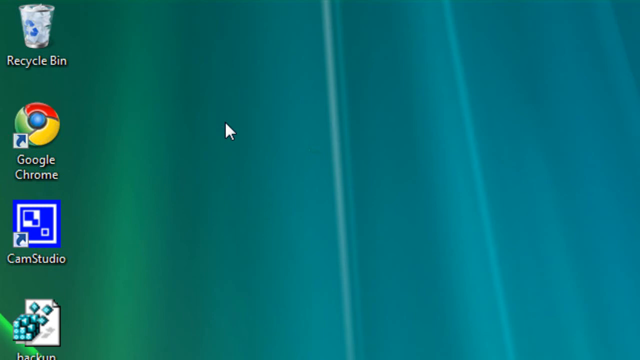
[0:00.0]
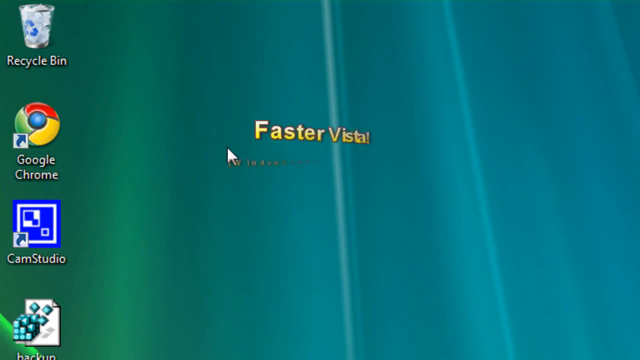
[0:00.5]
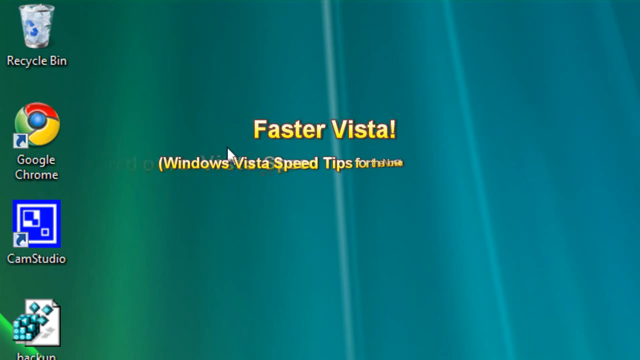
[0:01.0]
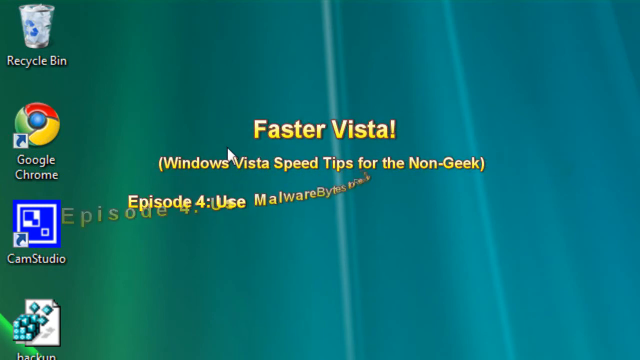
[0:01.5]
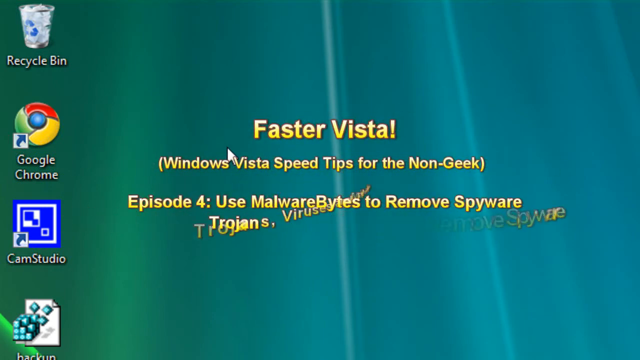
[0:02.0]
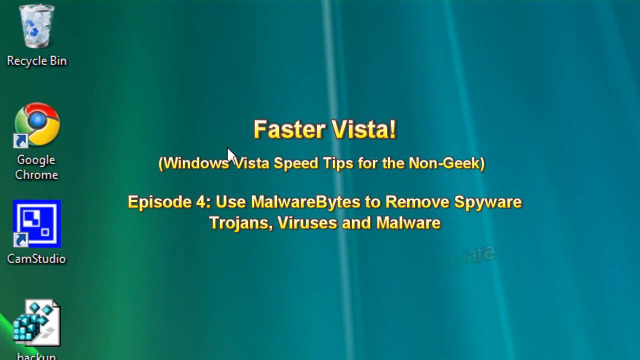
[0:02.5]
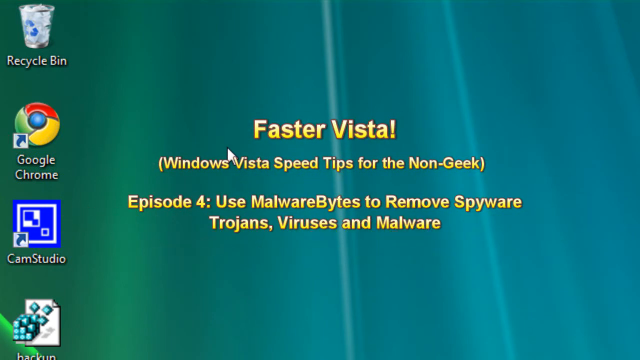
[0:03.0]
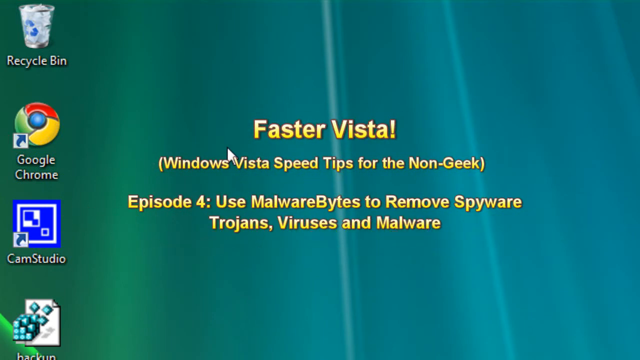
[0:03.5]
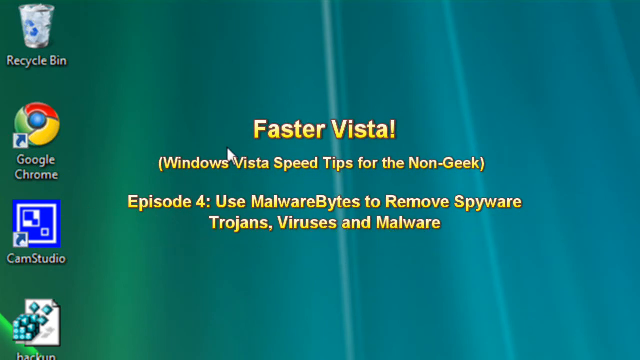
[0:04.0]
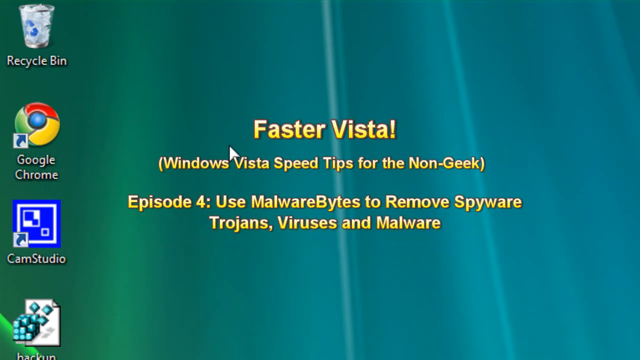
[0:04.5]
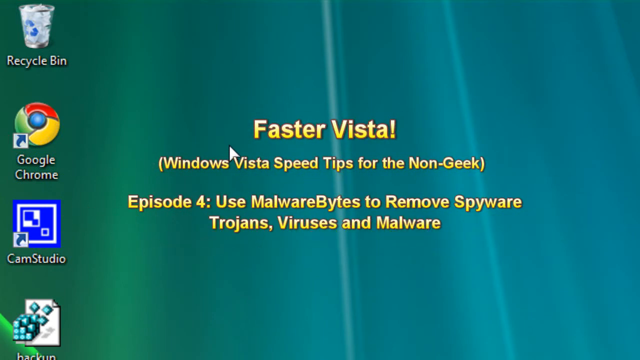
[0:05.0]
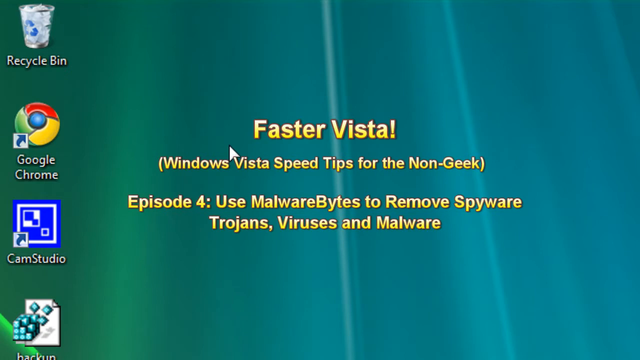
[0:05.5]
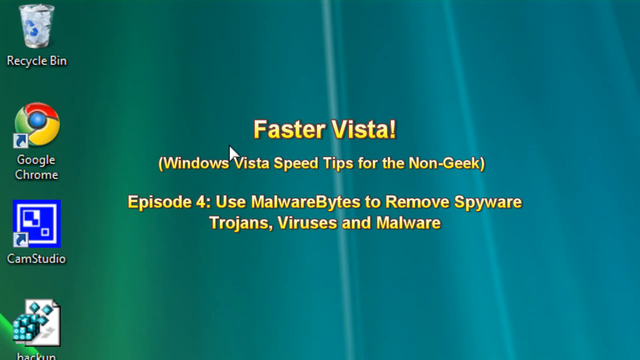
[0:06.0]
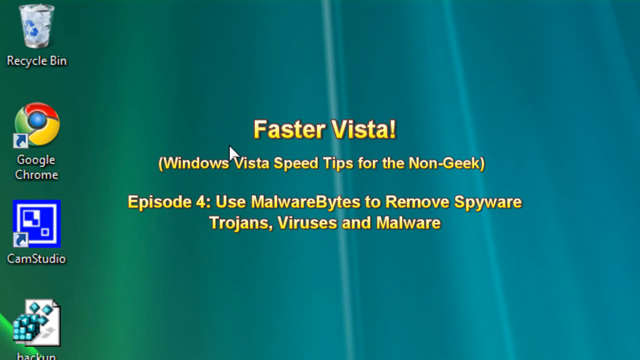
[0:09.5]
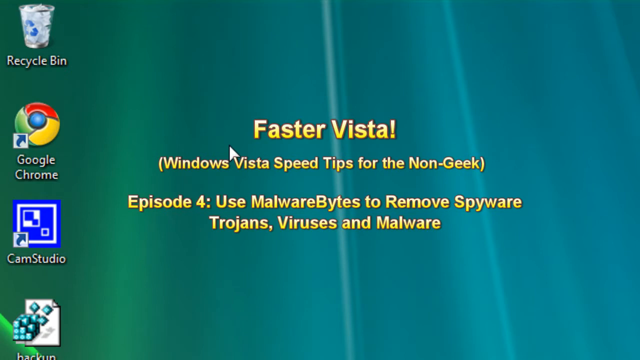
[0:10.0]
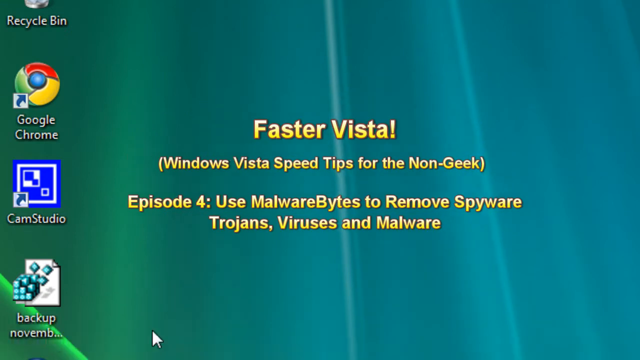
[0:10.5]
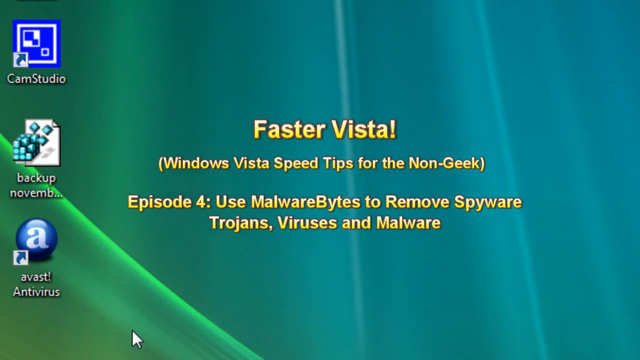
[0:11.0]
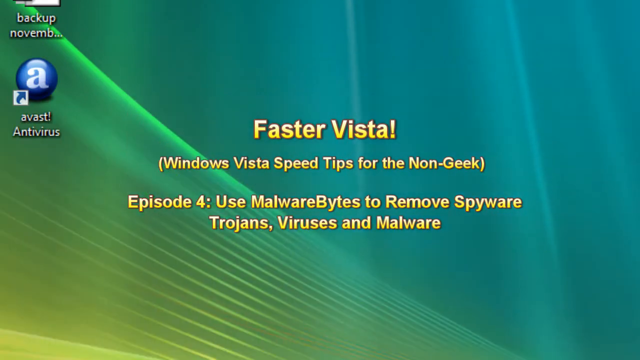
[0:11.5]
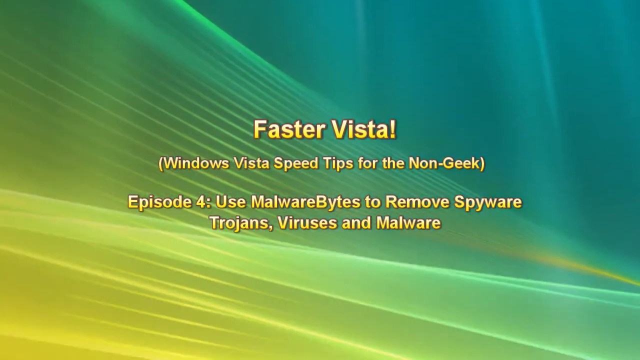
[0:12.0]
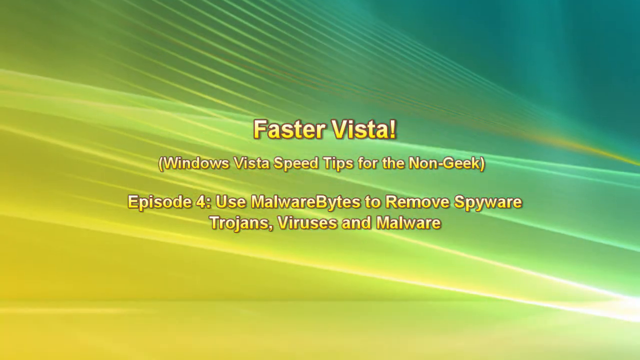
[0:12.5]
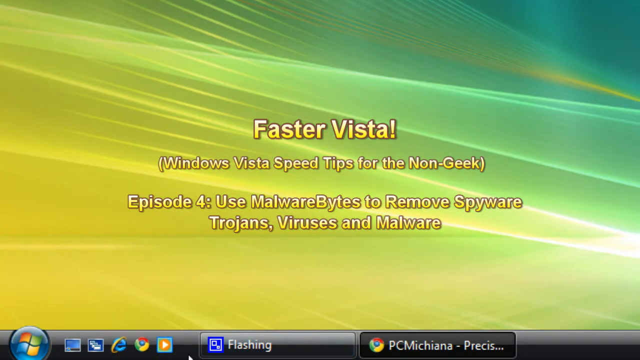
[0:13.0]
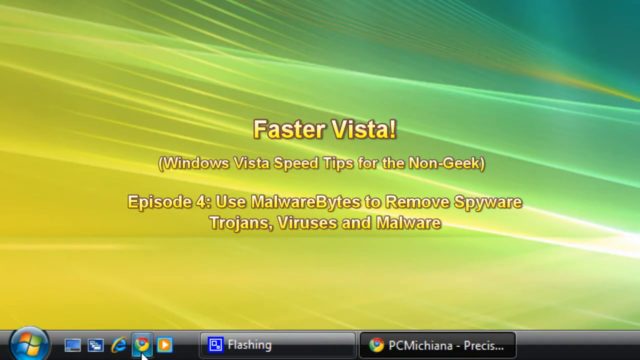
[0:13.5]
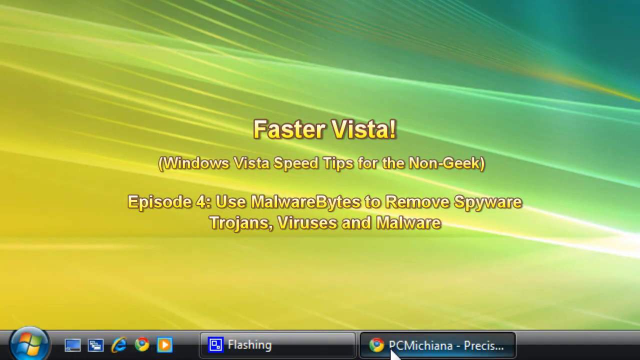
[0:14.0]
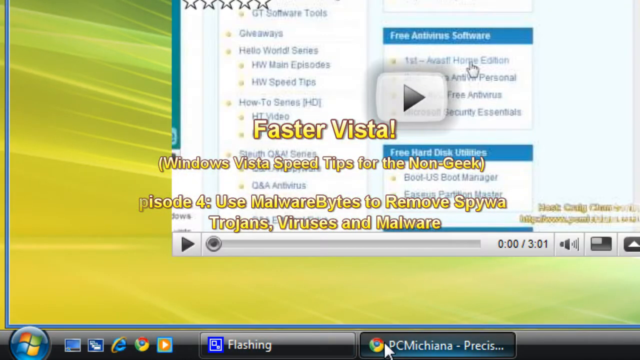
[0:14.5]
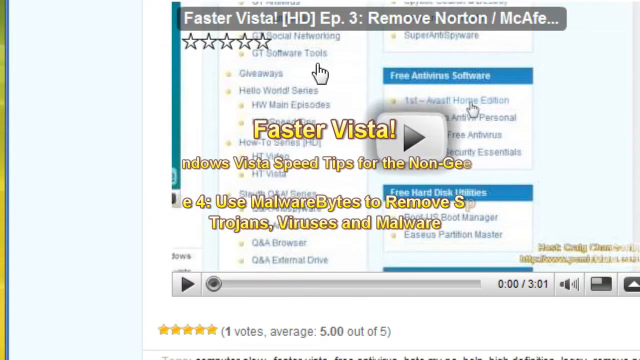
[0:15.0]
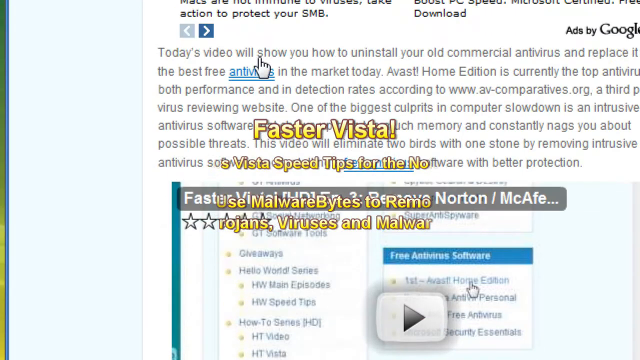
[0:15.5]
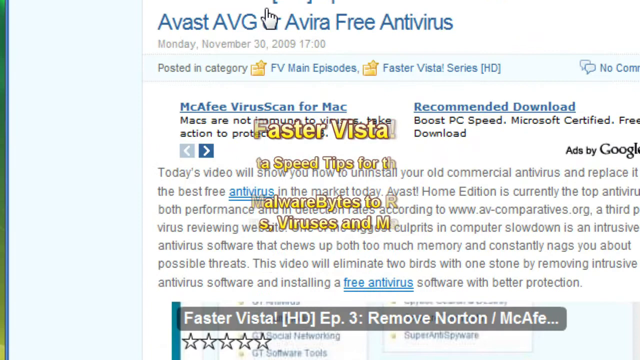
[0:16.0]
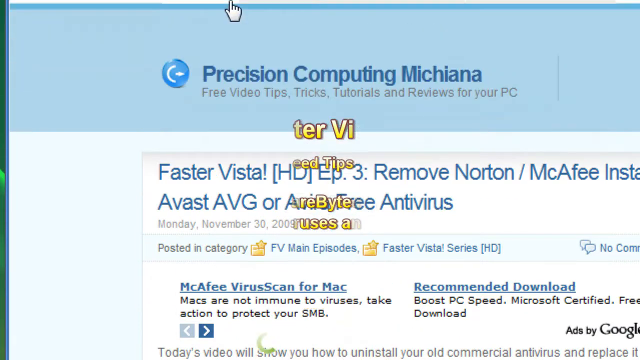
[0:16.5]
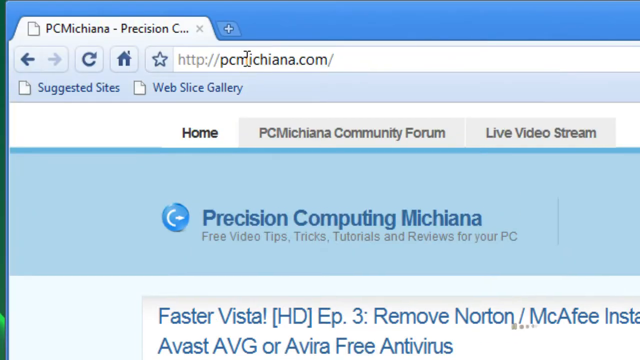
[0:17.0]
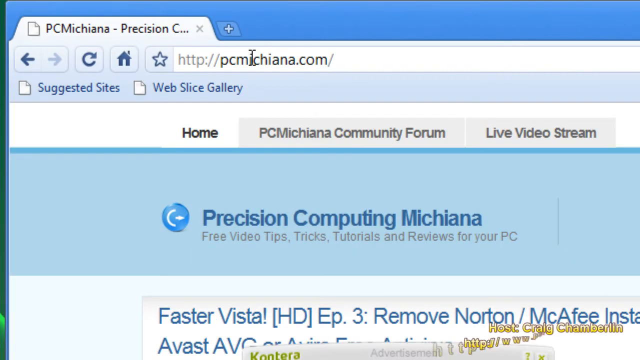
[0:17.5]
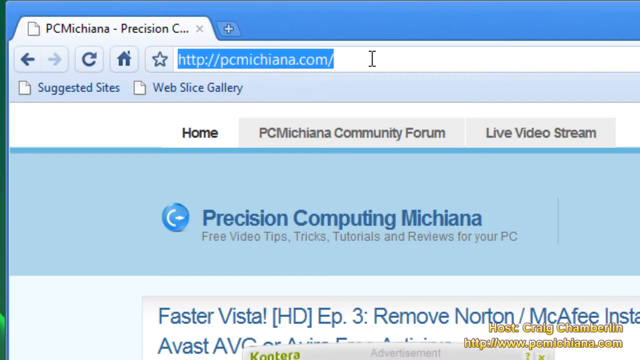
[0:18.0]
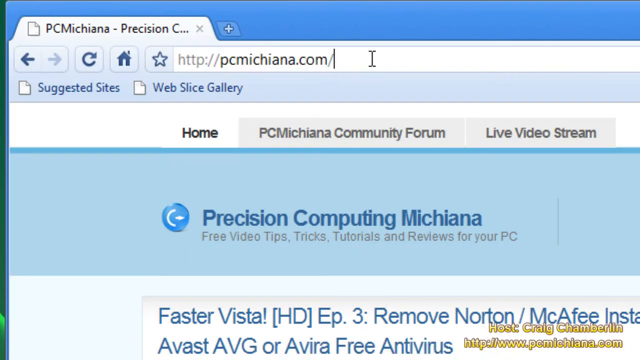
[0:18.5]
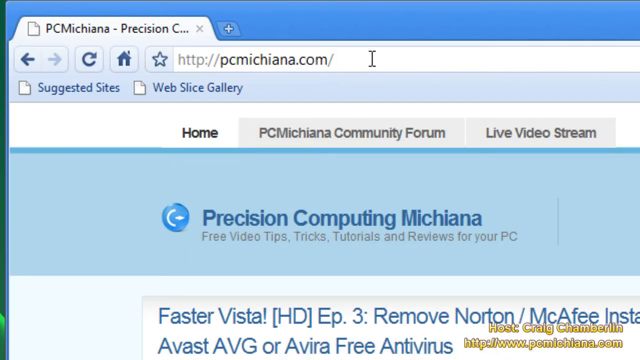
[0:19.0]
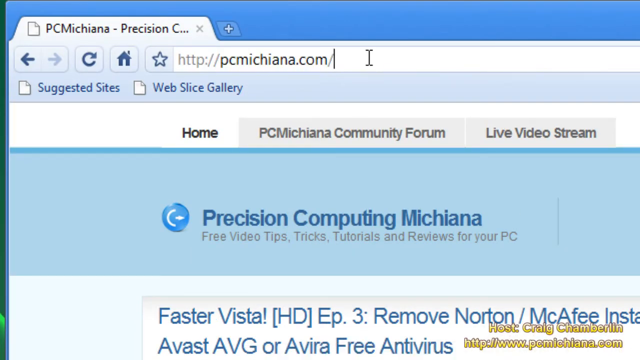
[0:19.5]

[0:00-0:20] The video opens on a title beginning "Episode 4, Use Malware". A desktop screen share follows, with graphics that appear not very advanced. The URL reads "pc.machiannia.com", and the user scrolls through different parts of the screen share. Many icons are on the left side of the screen, including Recycle Bin, Google Chrome and CamStudio. The desktop shows rainbow colours such as blue, green, red and yellow at the bottom, and streaks in the background split the screen into different areas.